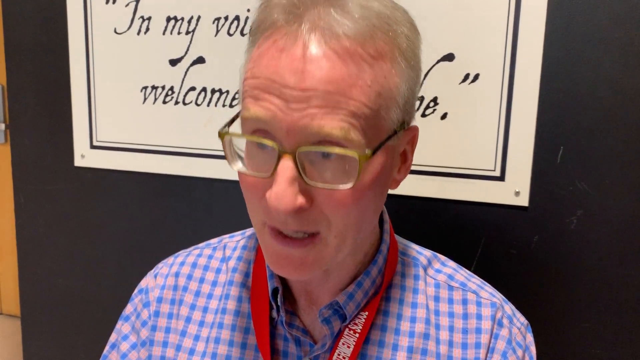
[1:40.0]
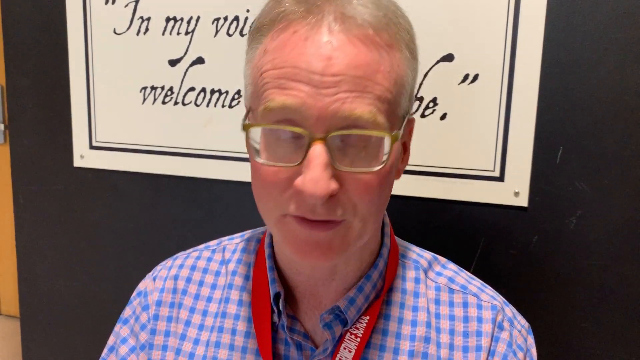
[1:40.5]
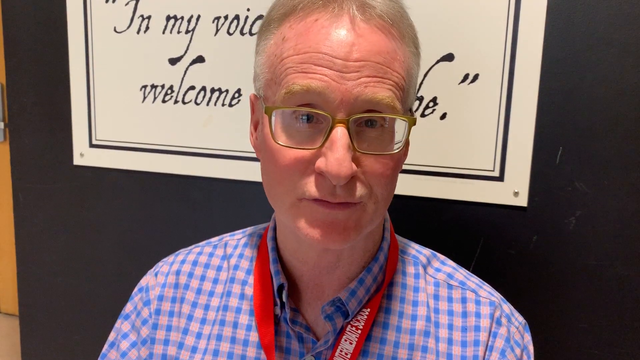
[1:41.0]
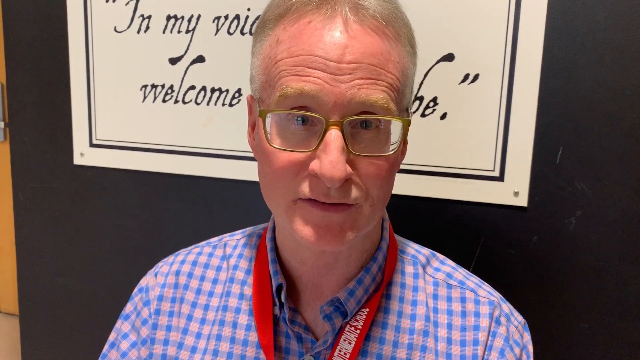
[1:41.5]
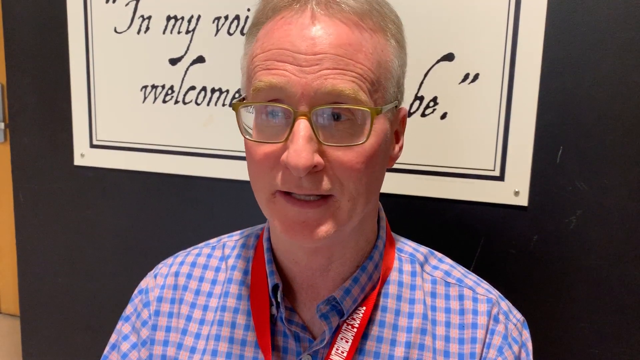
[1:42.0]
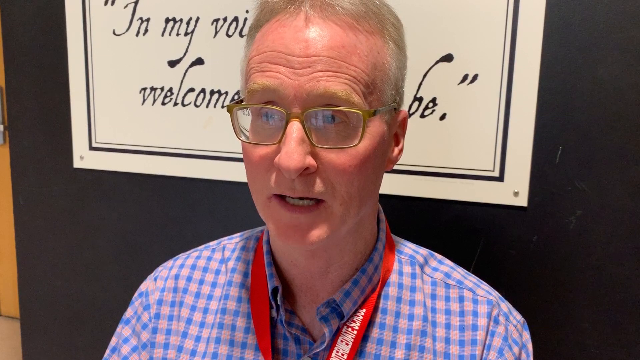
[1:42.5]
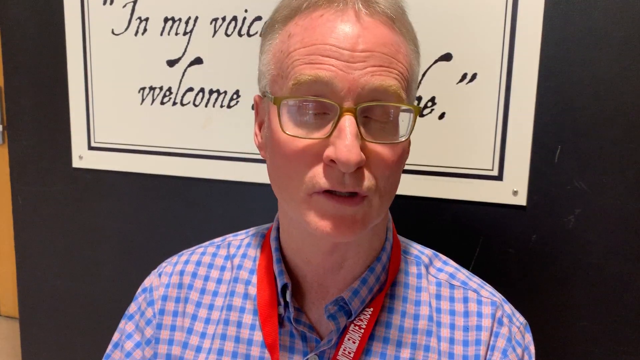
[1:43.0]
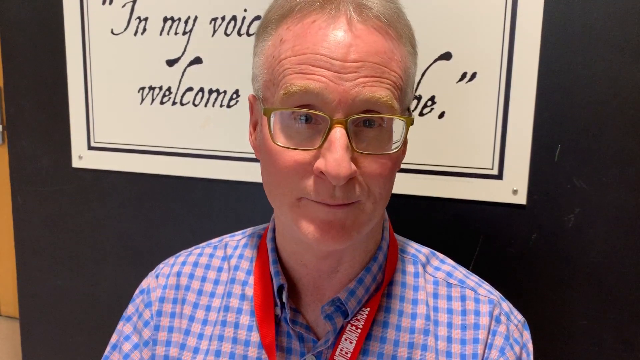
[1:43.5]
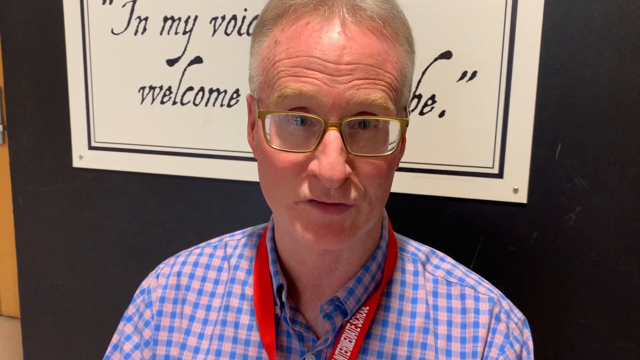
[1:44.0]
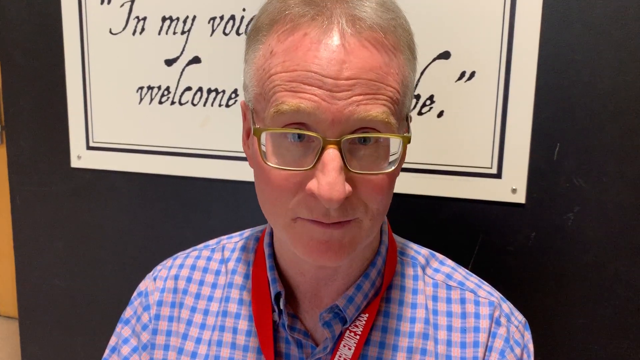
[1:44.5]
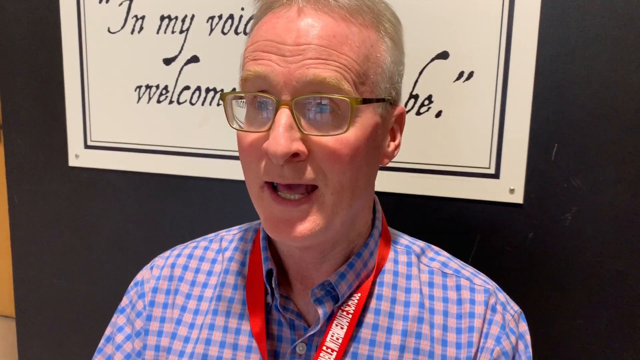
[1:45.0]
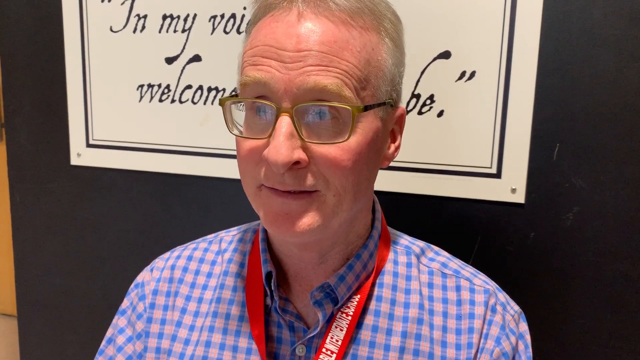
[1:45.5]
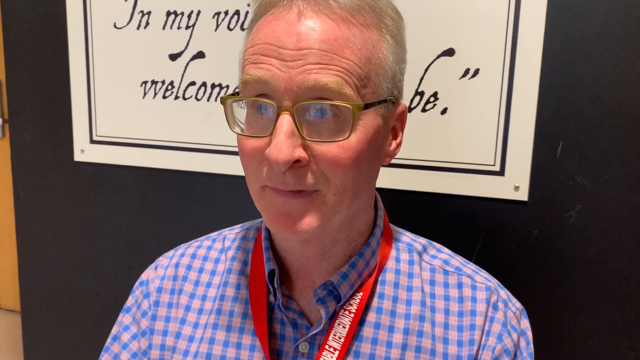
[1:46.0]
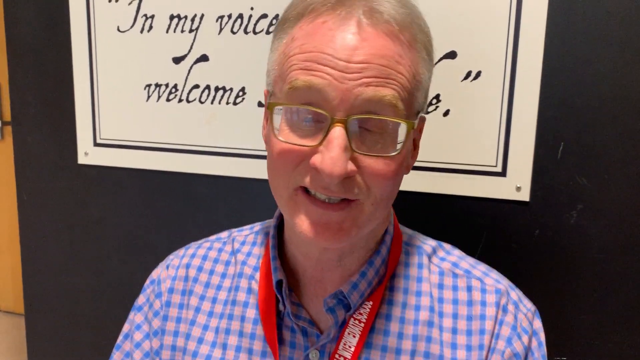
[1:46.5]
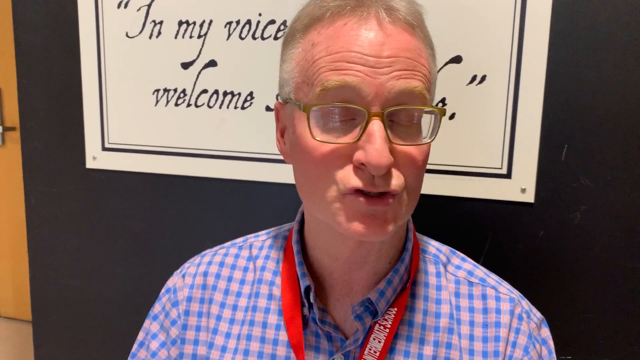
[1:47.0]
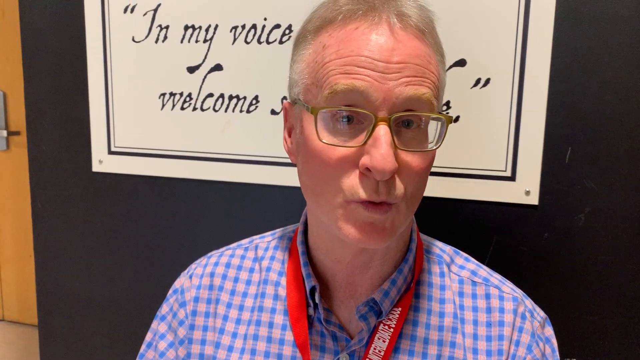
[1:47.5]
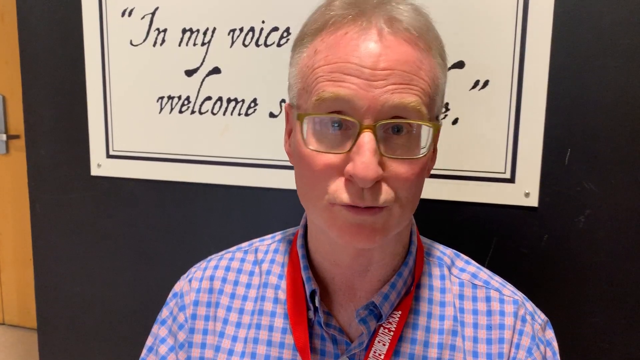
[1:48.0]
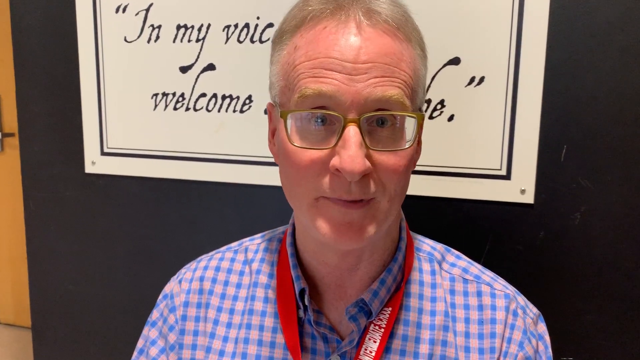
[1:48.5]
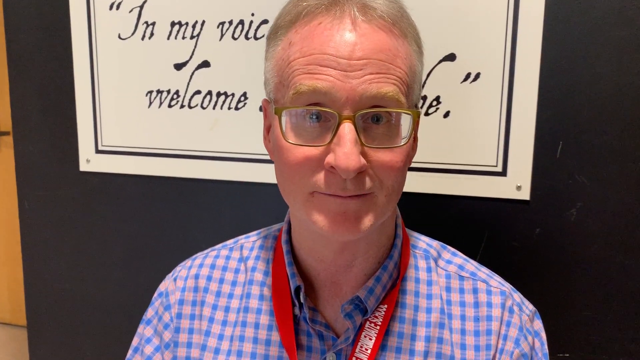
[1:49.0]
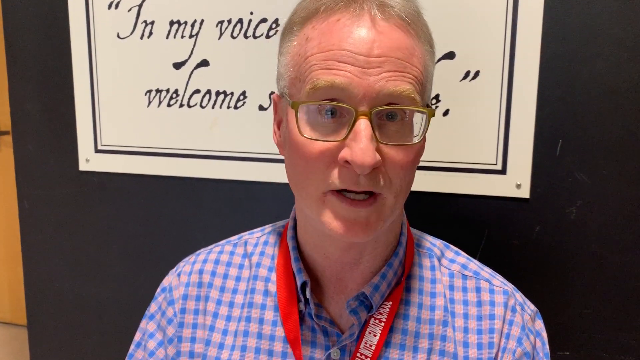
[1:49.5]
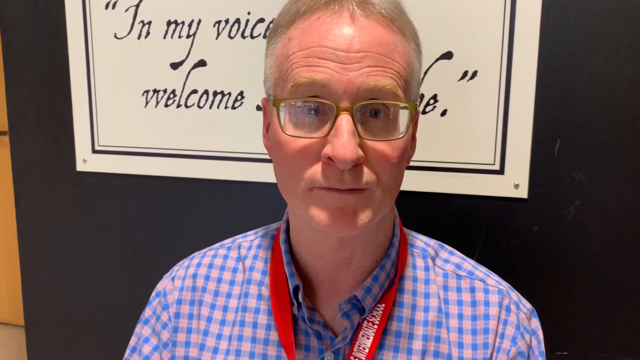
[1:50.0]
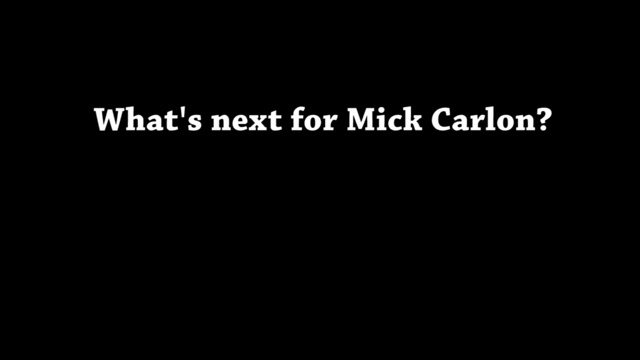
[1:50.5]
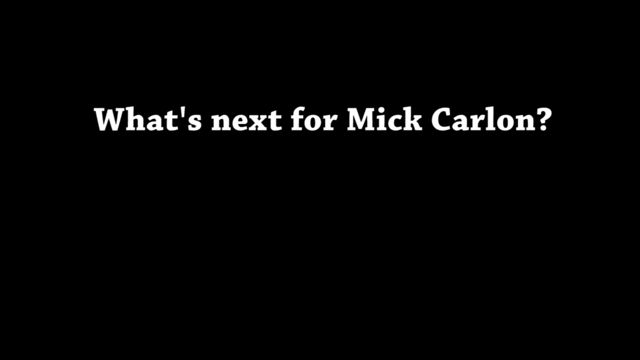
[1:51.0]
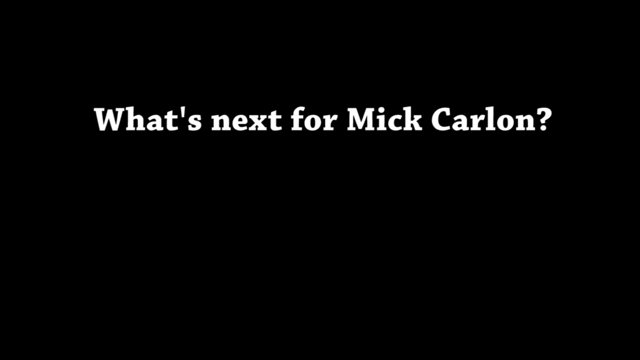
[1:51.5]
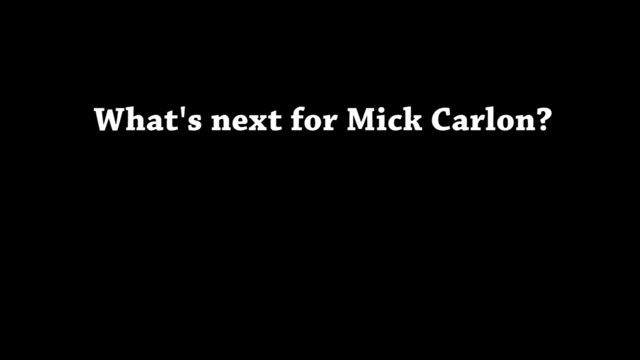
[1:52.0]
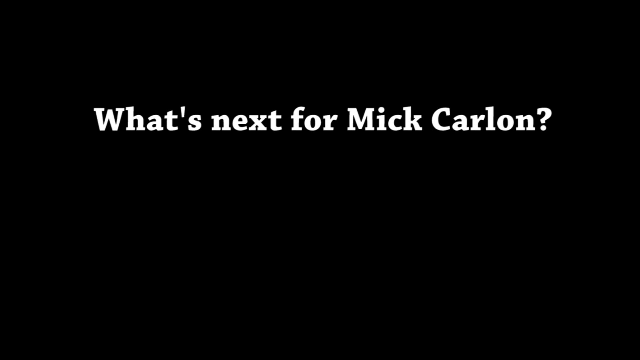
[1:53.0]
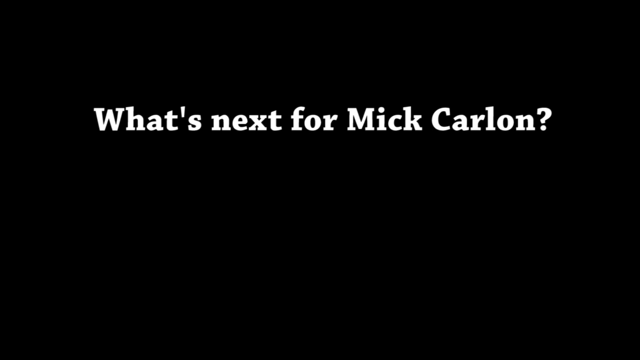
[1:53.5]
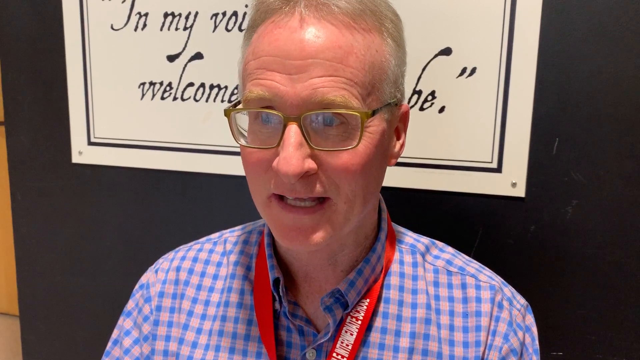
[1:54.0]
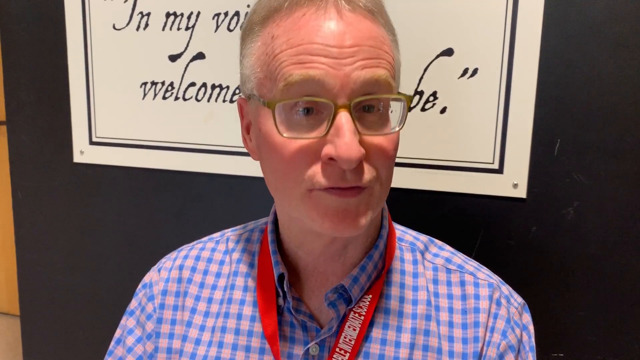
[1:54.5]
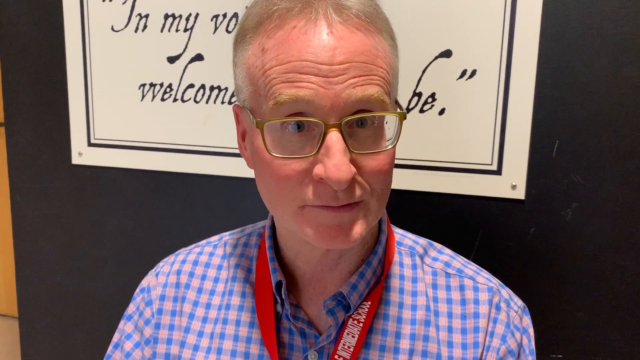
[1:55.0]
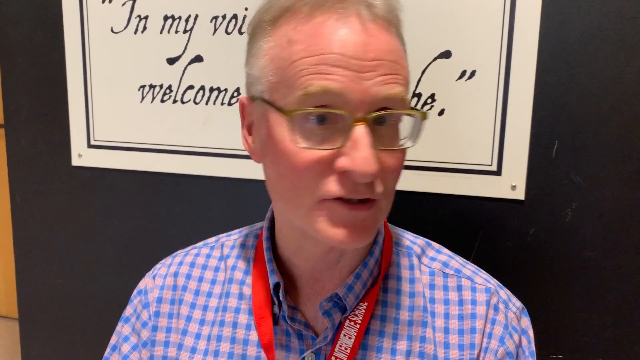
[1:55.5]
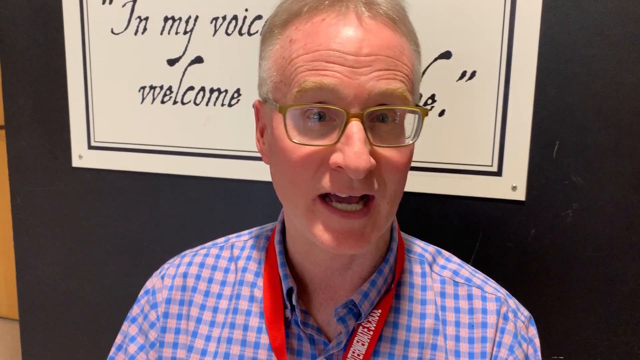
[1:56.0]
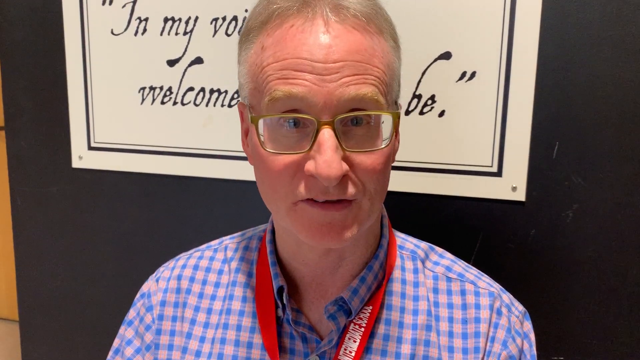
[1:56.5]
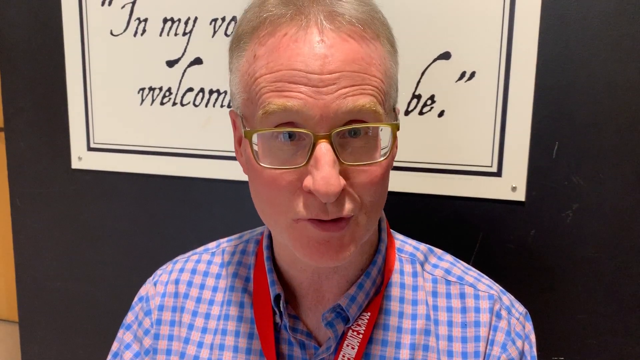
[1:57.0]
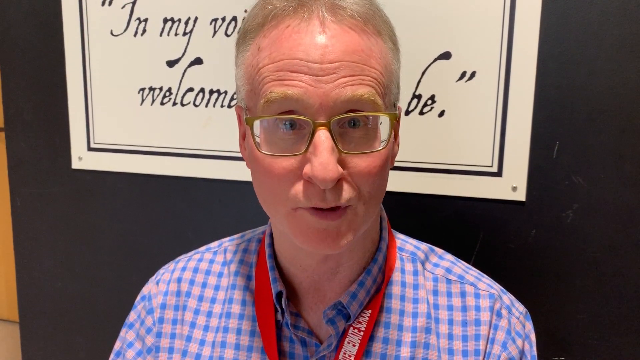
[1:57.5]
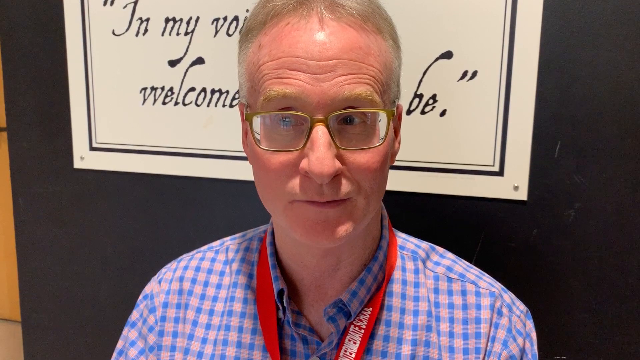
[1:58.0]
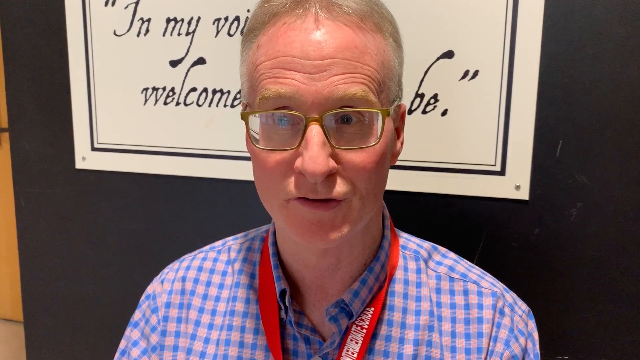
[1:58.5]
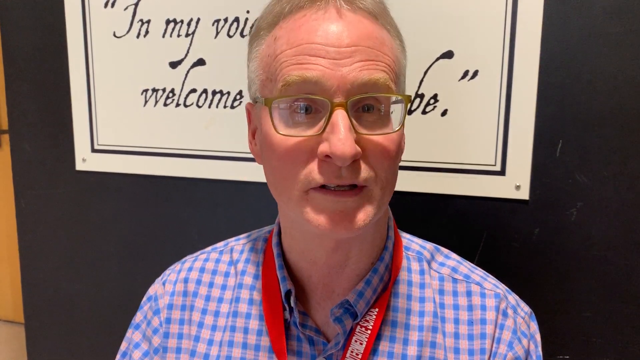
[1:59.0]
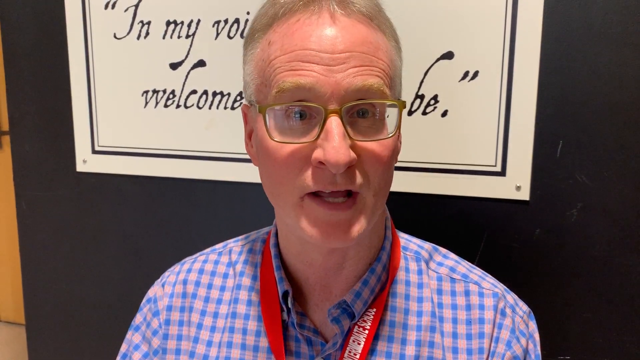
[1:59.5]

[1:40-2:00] The man, apparently being interviewed, talks and shakes his head. Text says "What's next for Mick Carlon?", suggesting he may be Mick Carlon. His lanyard is visible, though it is unclear whether it holds a school ID or a visitor's badge, and he appears to have a sticker on him, suggesting he is a visitor and the author rather than a teacher.